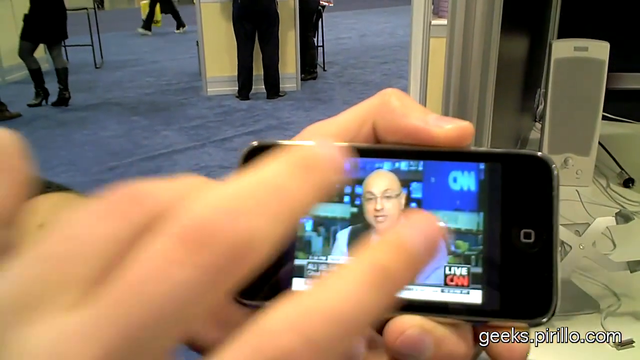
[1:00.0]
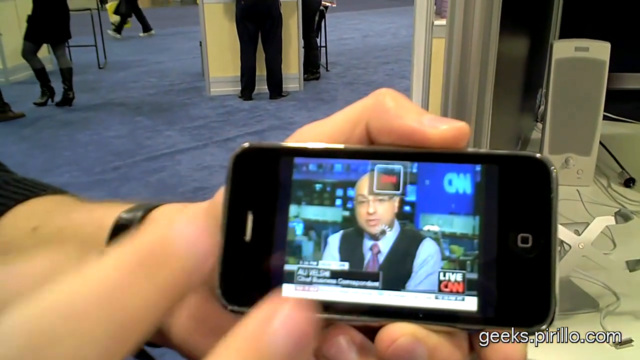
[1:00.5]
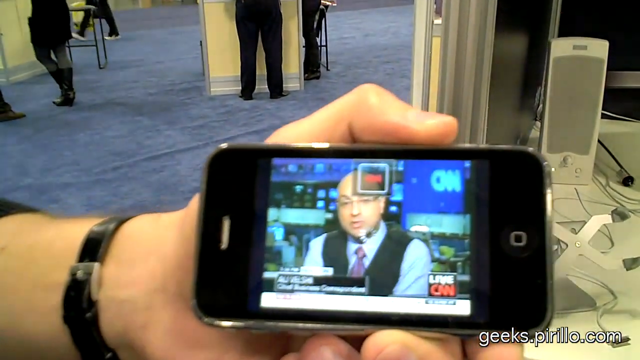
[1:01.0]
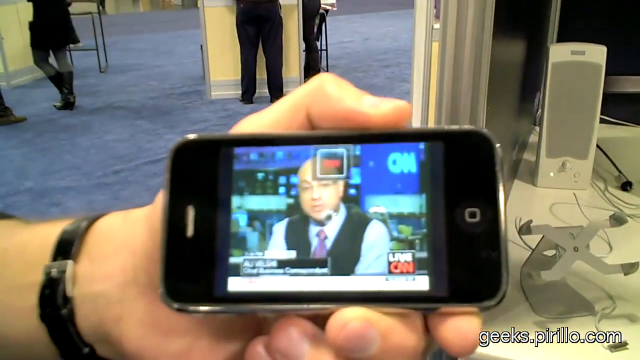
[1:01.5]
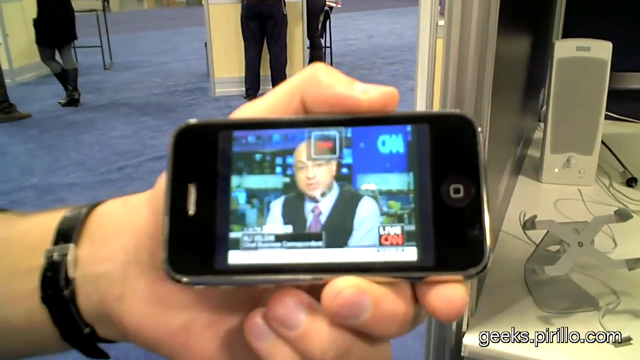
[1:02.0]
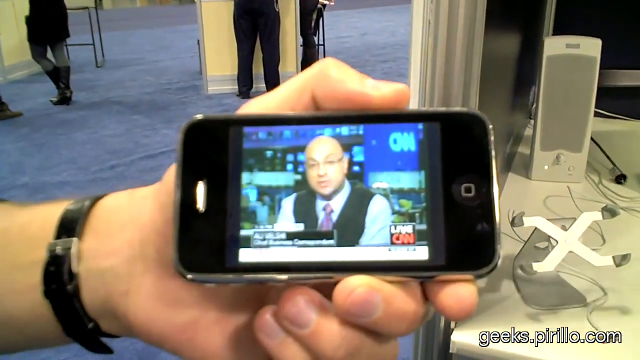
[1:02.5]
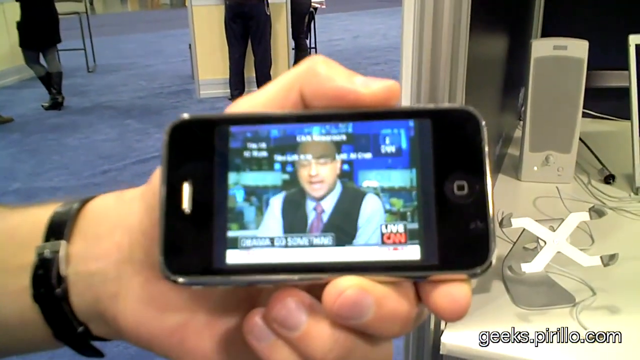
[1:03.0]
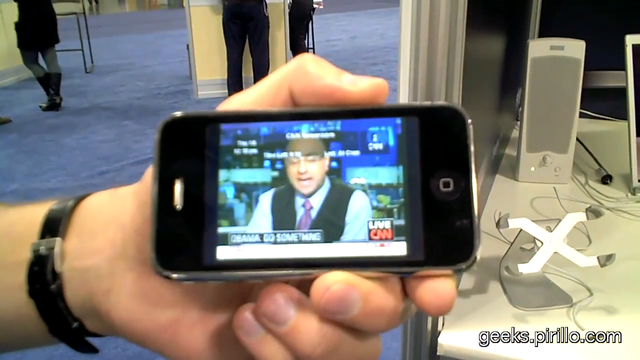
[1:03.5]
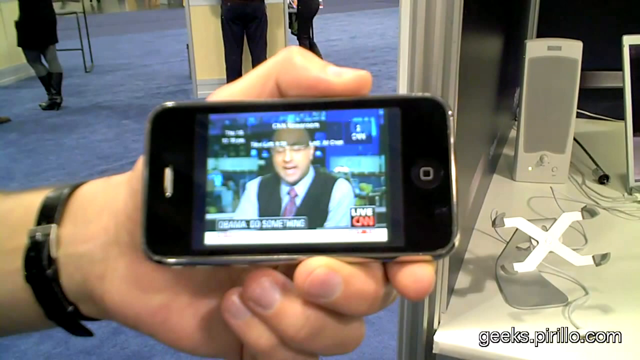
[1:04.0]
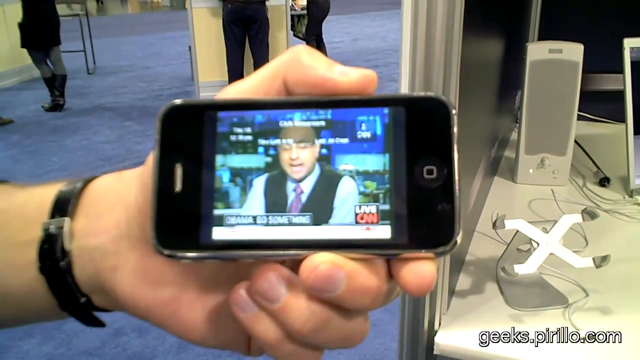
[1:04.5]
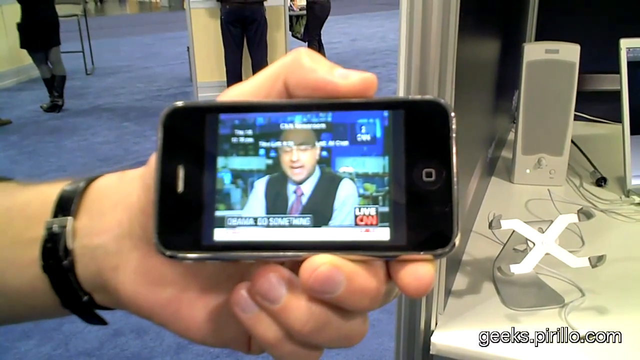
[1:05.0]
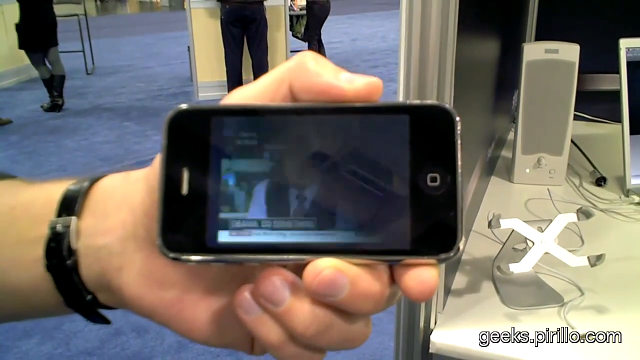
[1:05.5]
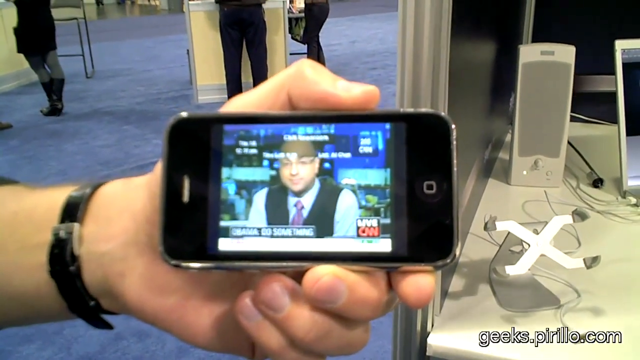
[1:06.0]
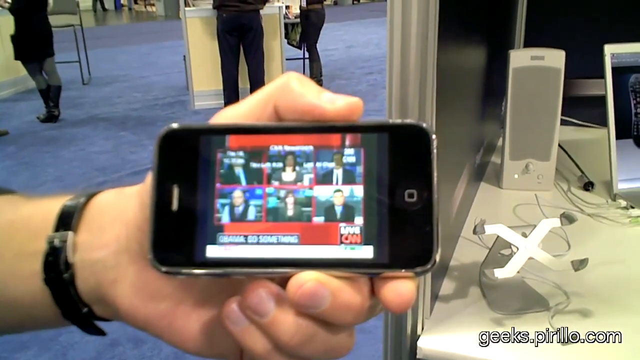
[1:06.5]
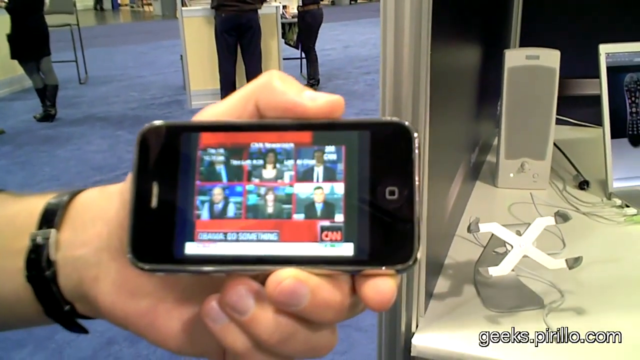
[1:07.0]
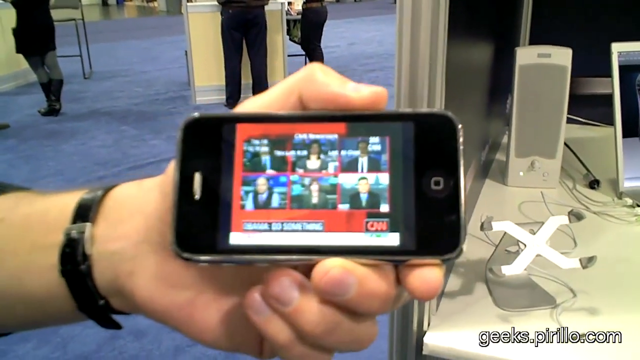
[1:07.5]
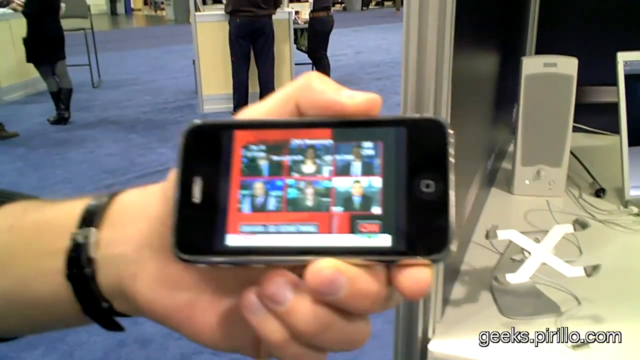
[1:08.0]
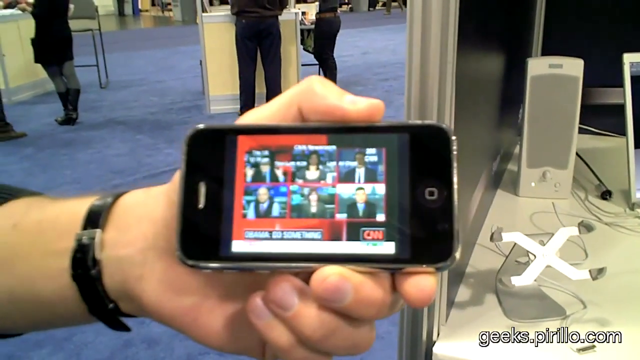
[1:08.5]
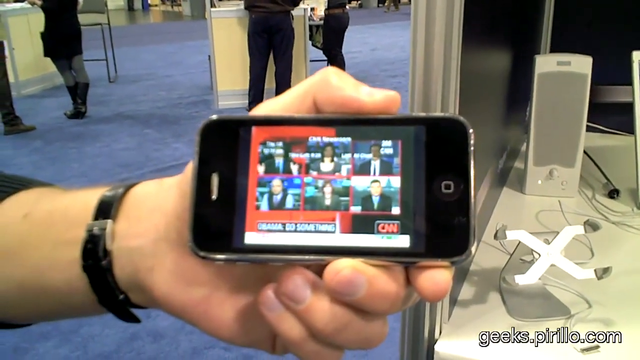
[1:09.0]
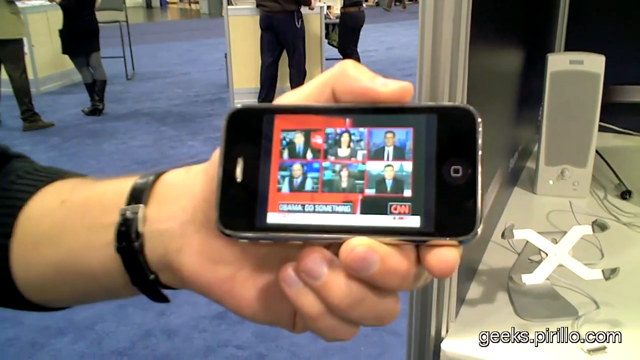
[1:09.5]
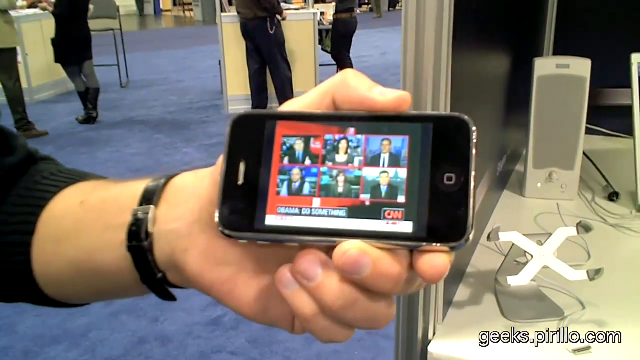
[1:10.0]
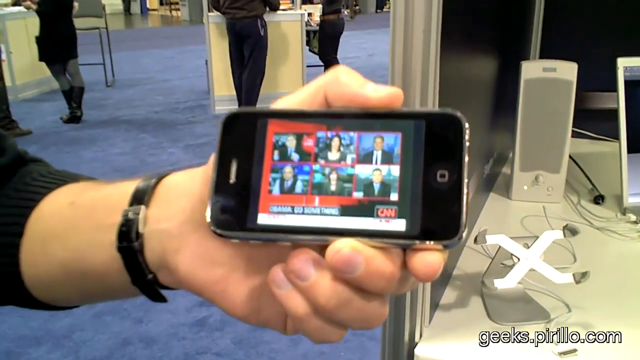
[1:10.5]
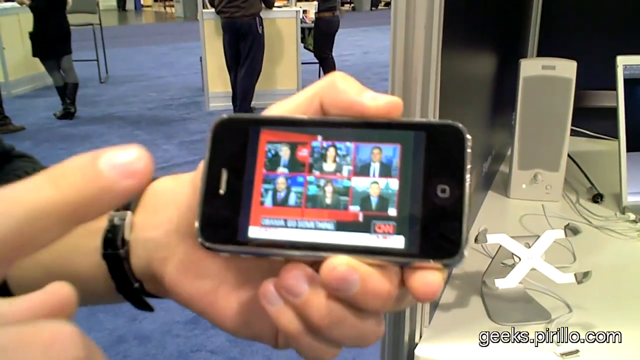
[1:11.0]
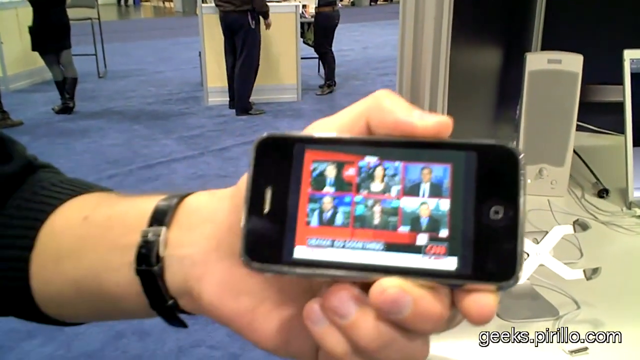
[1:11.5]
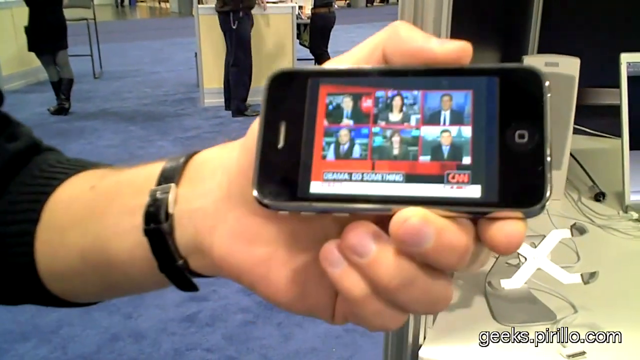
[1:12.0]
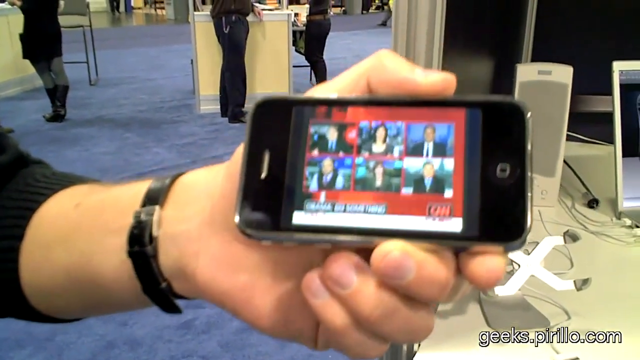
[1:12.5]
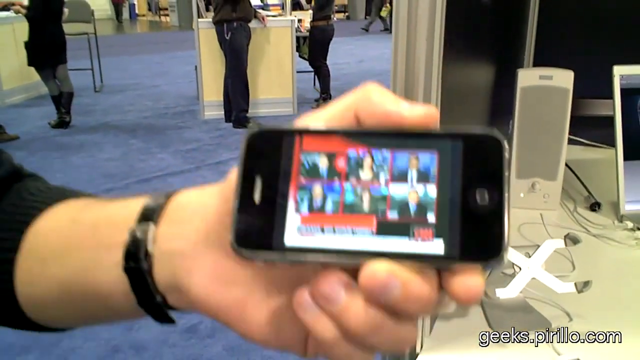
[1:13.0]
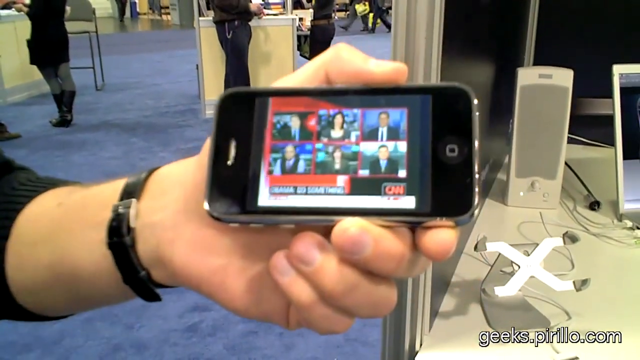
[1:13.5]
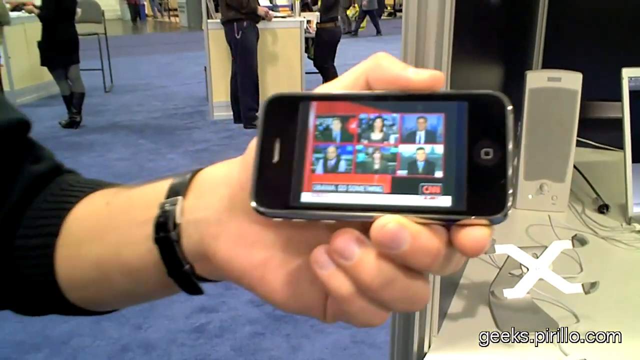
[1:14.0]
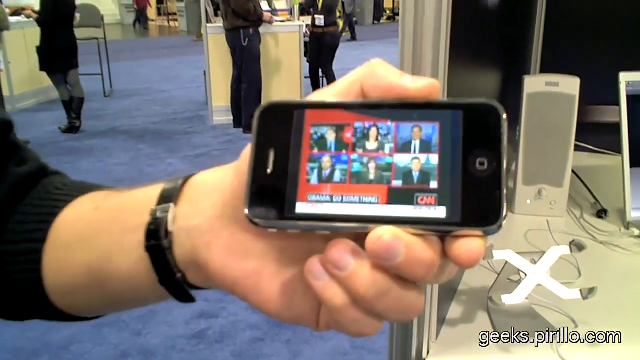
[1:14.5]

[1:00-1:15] The horizontally held iPhone shows the same CNN news broadcast. After a transitional shot, the broadcast shows a split screen of six smaller sub-screens with six people on camera, each with a red border, and a CNN logo at the bottom. The man holding the phone raises the index finger of his right hand twice and points to the phone screen, but no other changes are made to the broadcast.